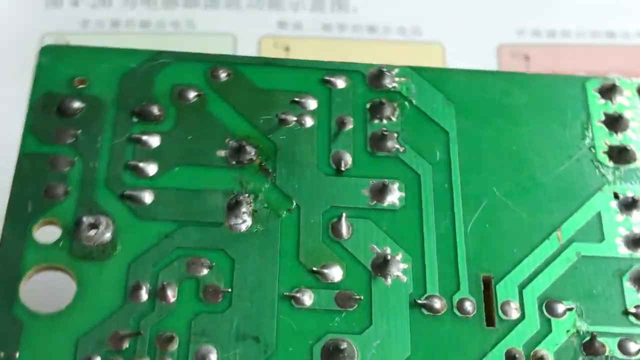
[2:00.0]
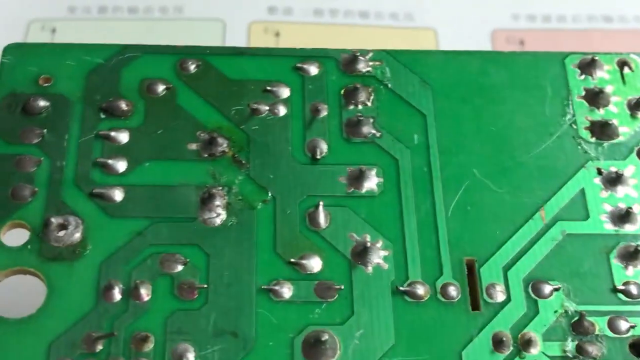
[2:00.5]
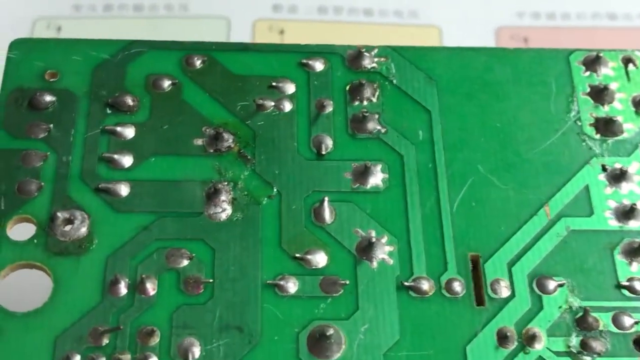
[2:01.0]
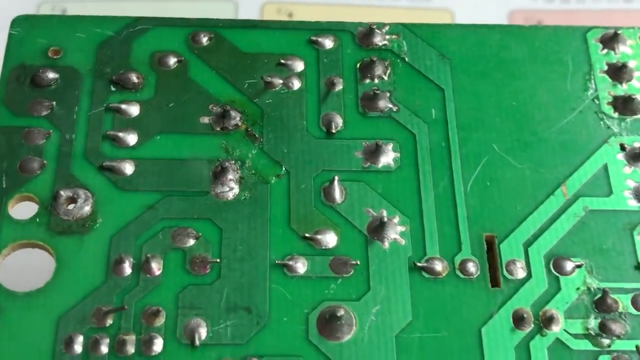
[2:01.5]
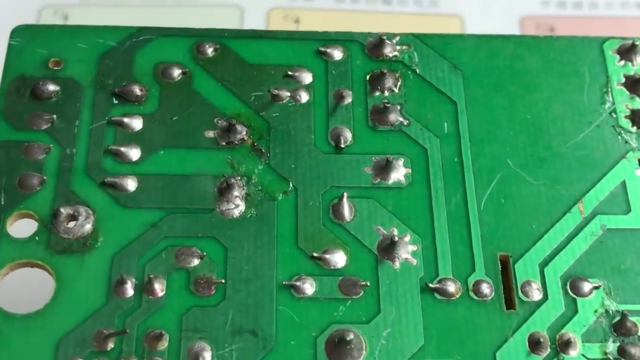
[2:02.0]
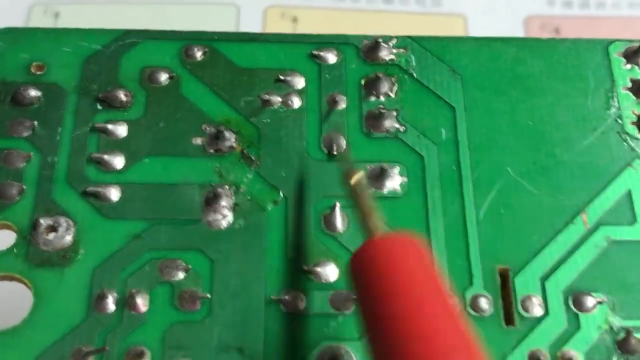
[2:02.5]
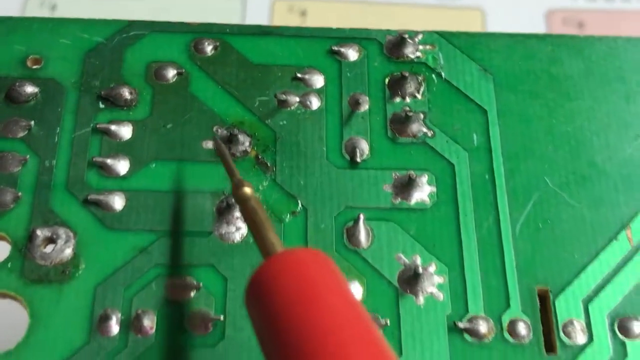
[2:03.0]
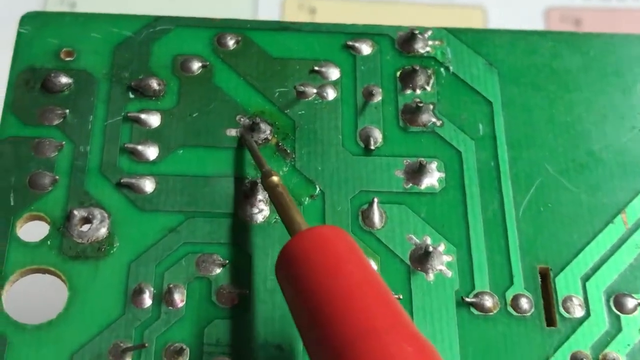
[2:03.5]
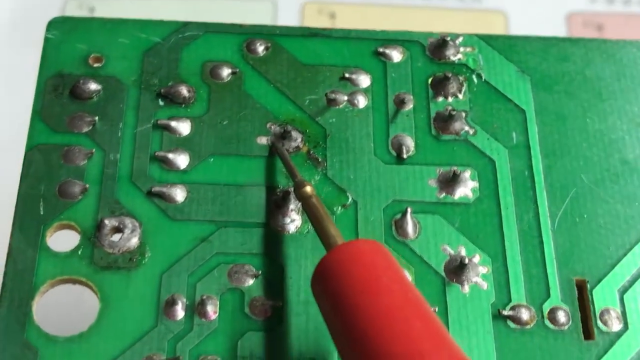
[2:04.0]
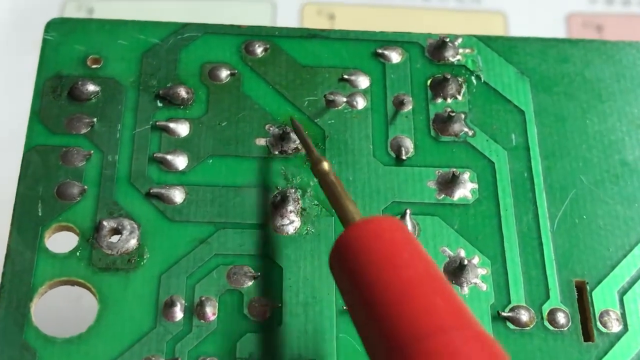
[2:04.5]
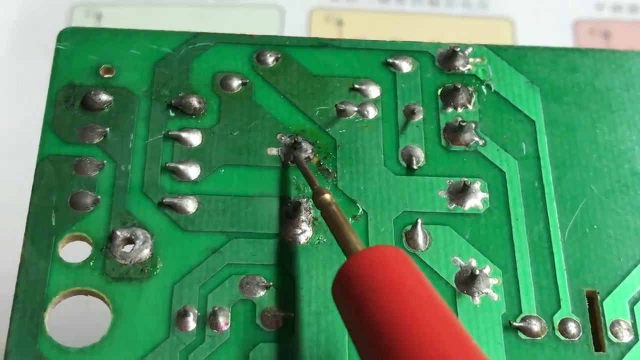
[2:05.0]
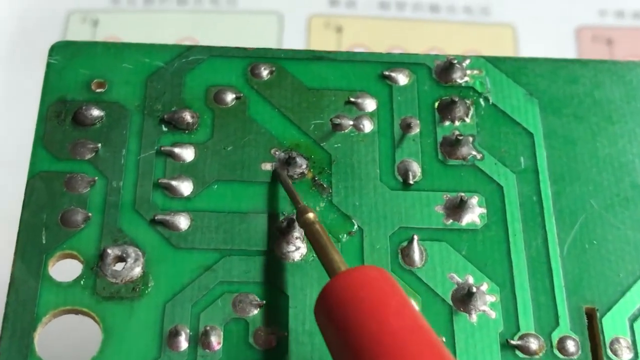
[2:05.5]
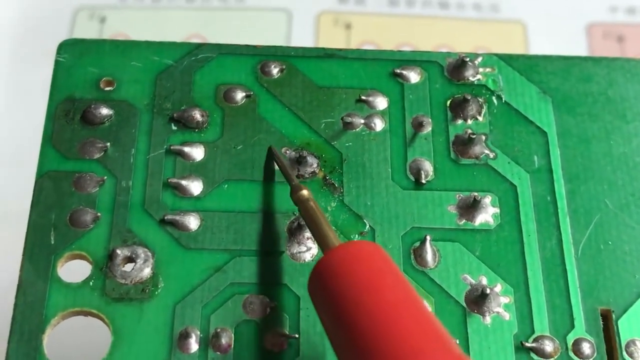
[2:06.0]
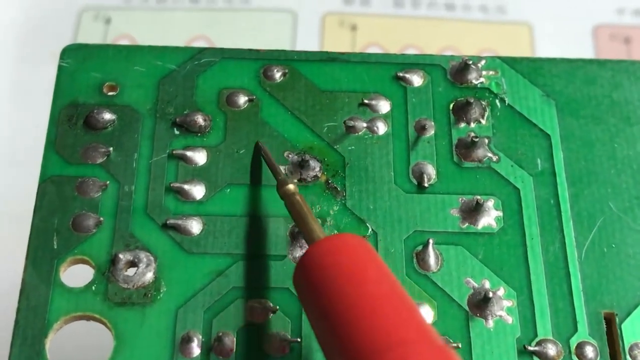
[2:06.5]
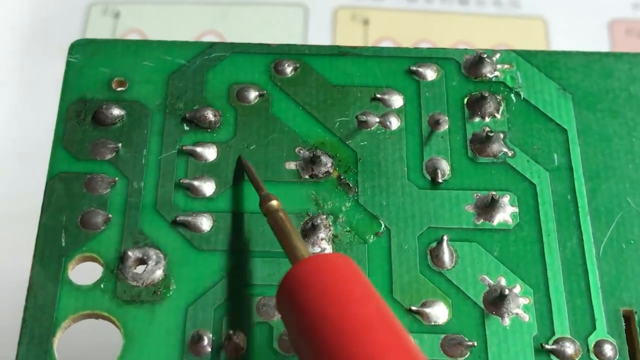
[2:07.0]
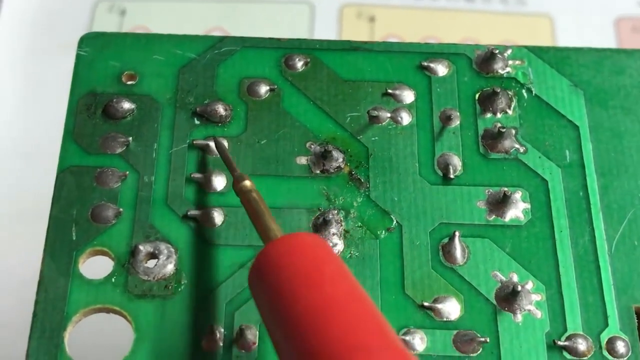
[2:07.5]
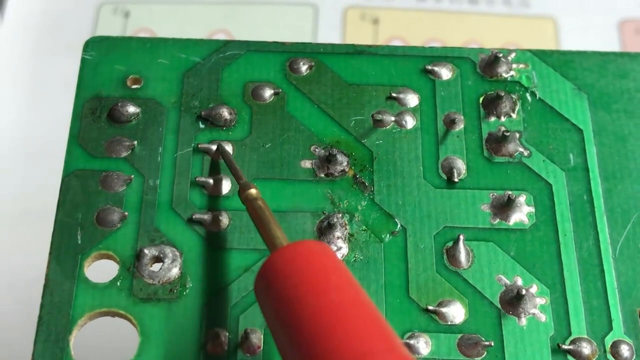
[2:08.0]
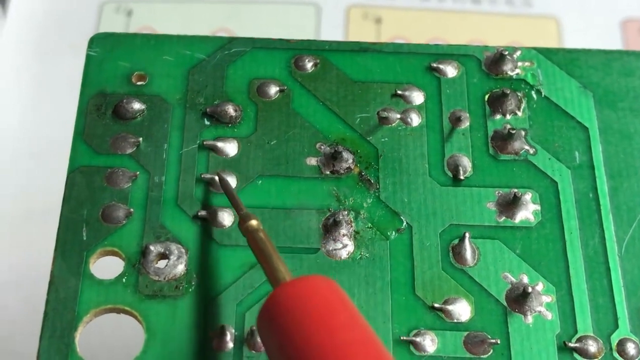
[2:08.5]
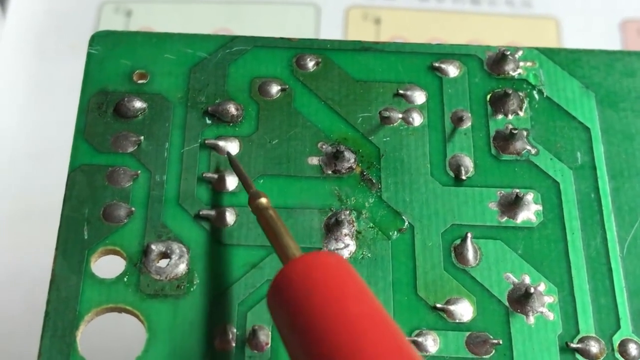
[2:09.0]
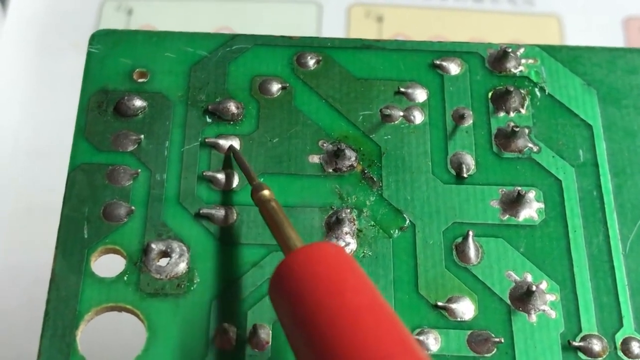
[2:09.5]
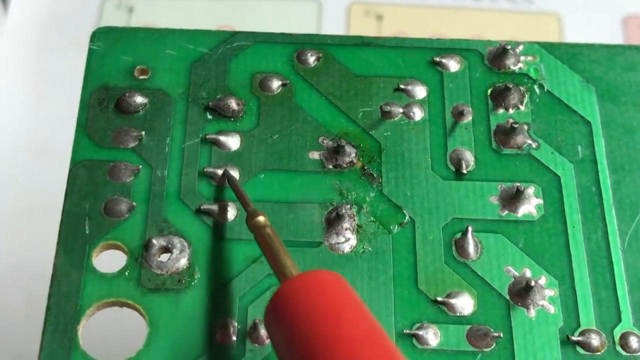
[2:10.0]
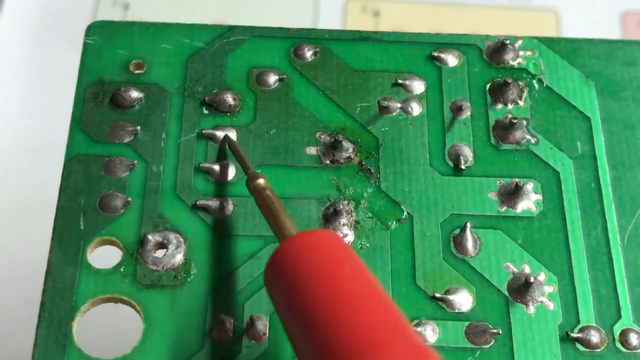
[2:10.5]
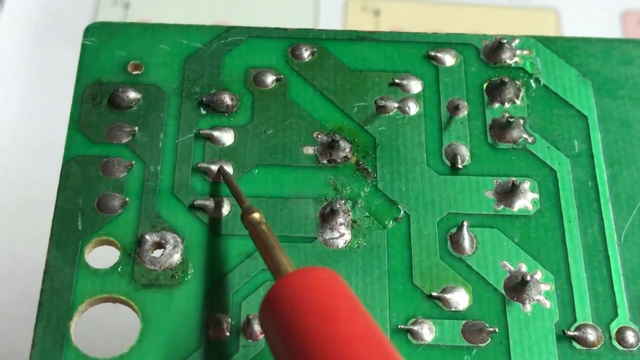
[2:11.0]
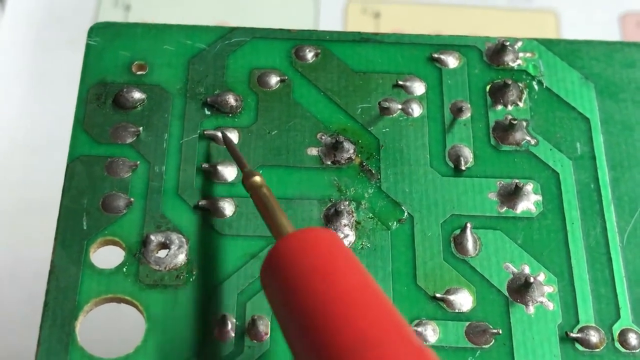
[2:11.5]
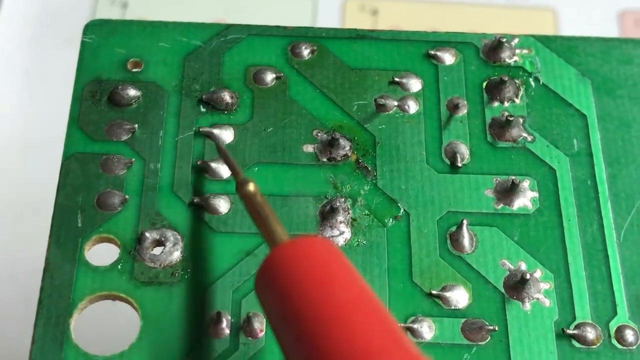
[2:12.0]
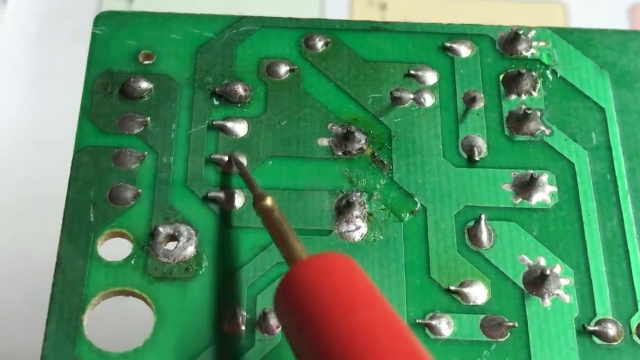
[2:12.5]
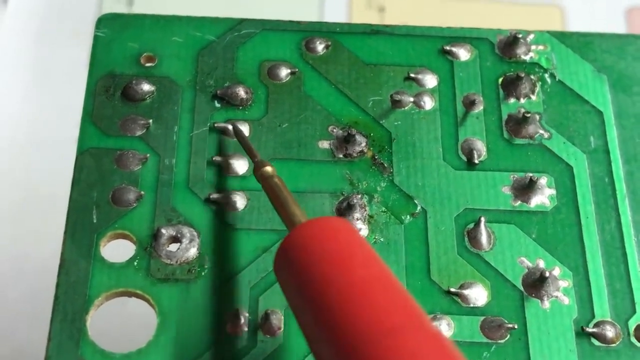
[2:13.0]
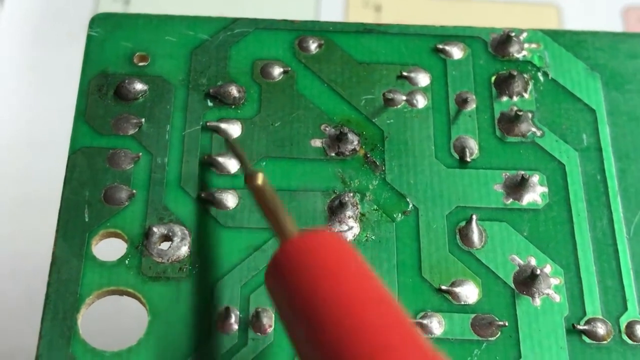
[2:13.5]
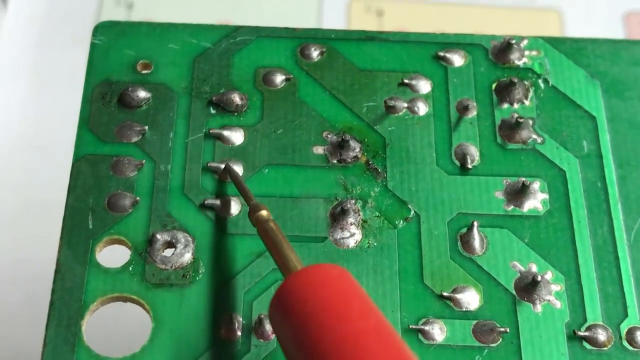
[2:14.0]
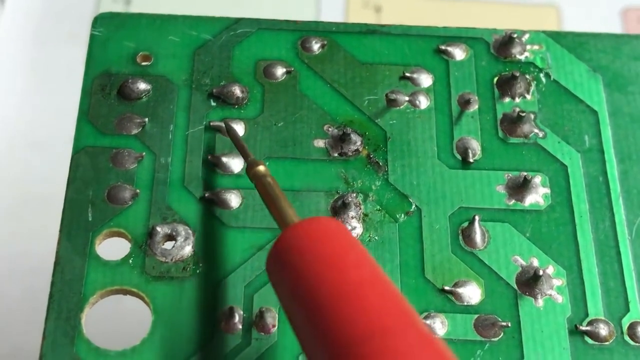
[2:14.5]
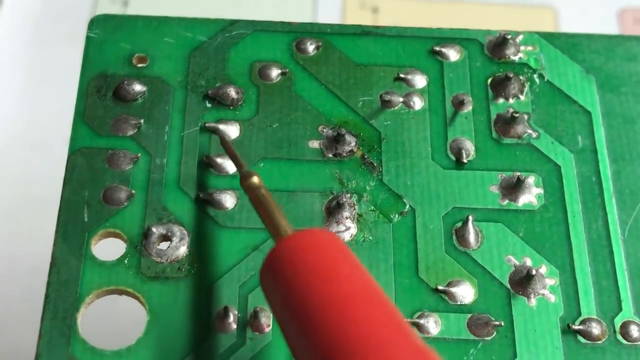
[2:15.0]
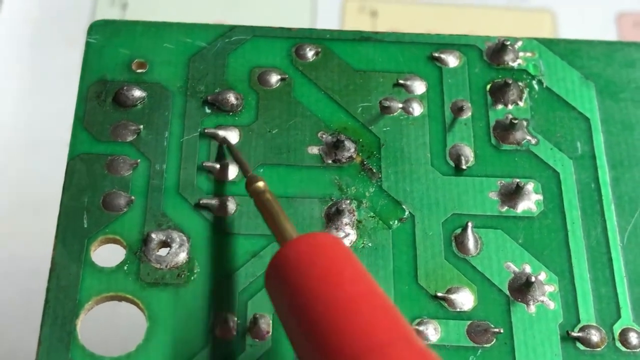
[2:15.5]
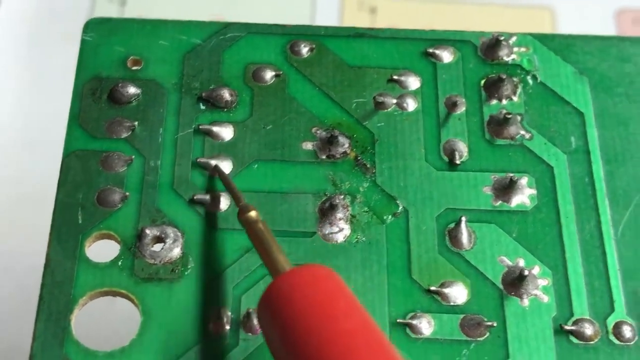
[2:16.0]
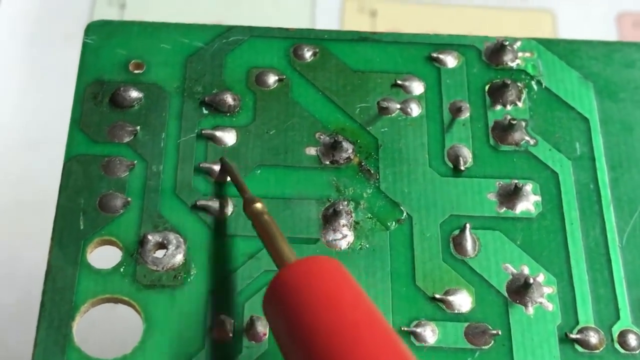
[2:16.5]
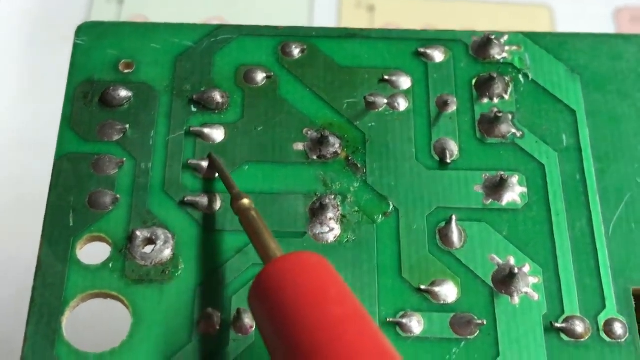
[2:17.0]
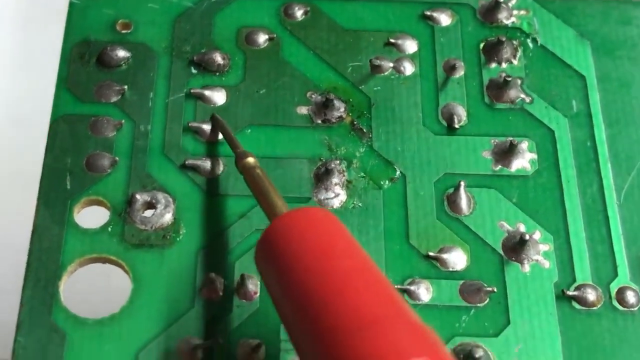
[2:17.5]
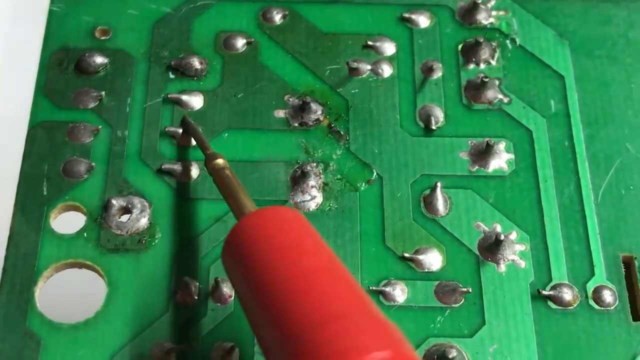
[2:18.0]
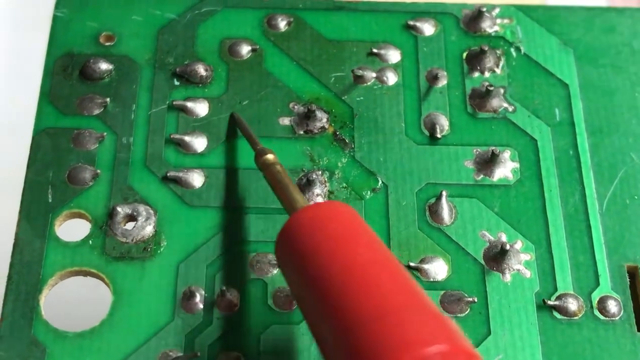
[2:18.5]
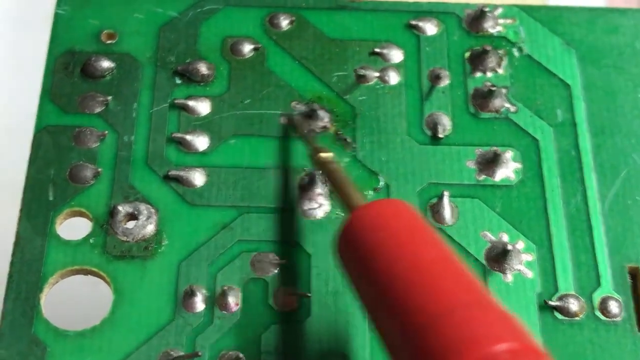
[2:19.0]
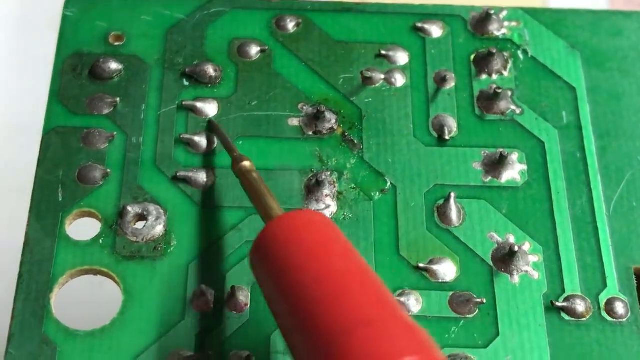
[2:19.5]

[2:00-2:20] A close-up shows a green circuit board with a bunch of geometric shapes in a slightly darker green than the rest of the board. Many little metal pieces on the board look sort of like some kind of metal flux, maybe, that was put onto the board. A golden pointer with a red base goes back and forth pointing at two teardrop-shaped pieces that point to the left. It then points at a piece on the right side of the board that looks a bit more circular and has a pointed piece heading upwards off the board, and it continues going back and forth between the pieces on the left and the one on the right. As it moves, it makes a little dent and a little scratch on the board.